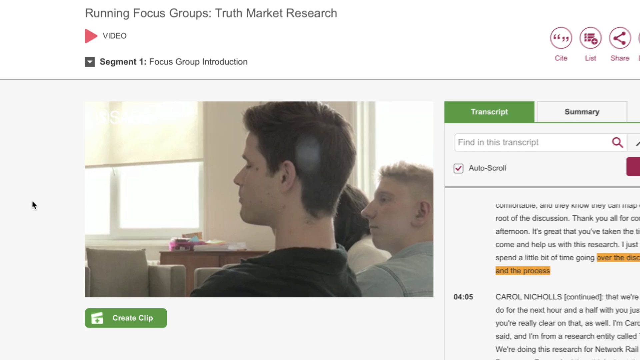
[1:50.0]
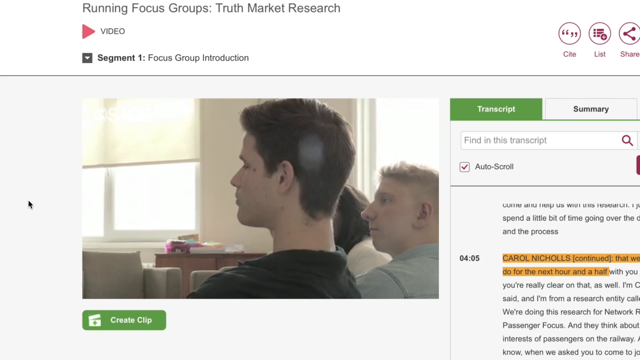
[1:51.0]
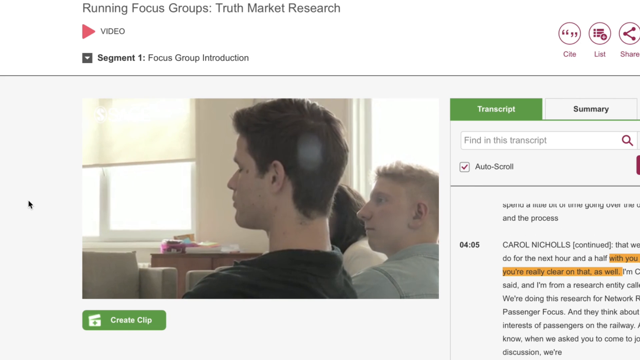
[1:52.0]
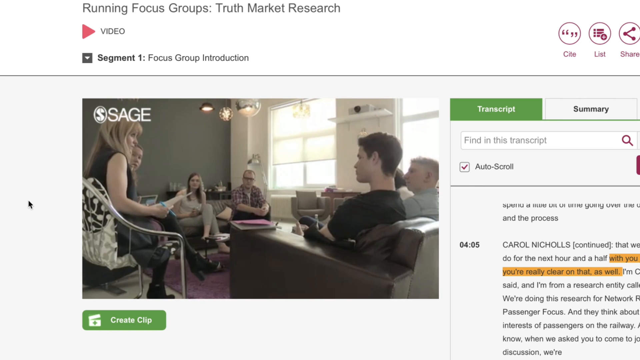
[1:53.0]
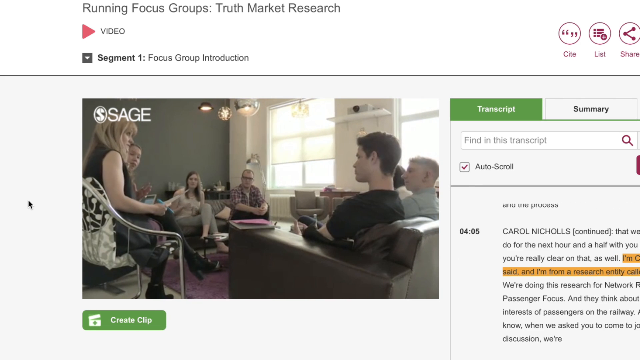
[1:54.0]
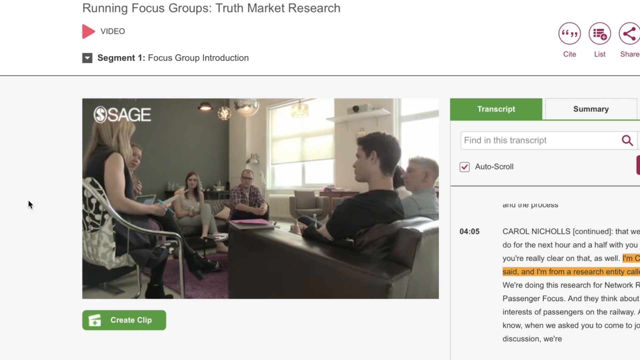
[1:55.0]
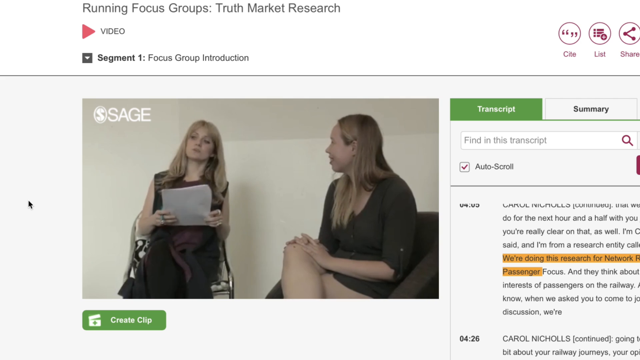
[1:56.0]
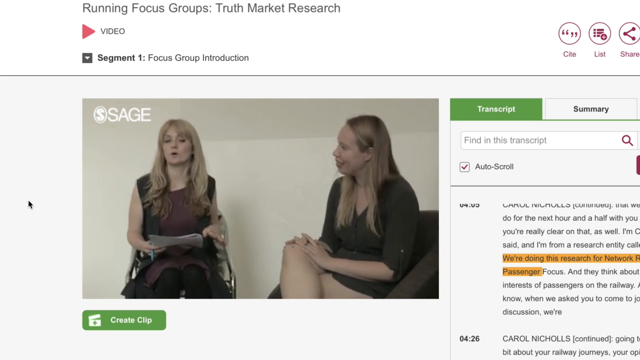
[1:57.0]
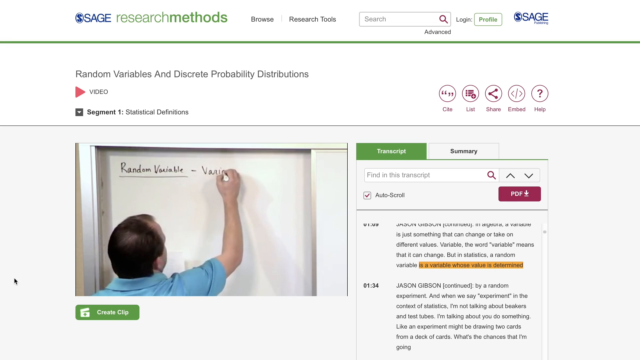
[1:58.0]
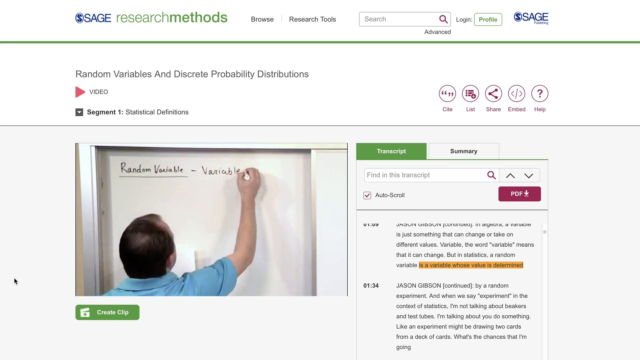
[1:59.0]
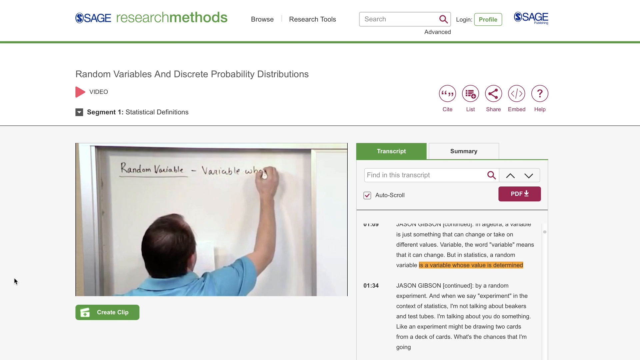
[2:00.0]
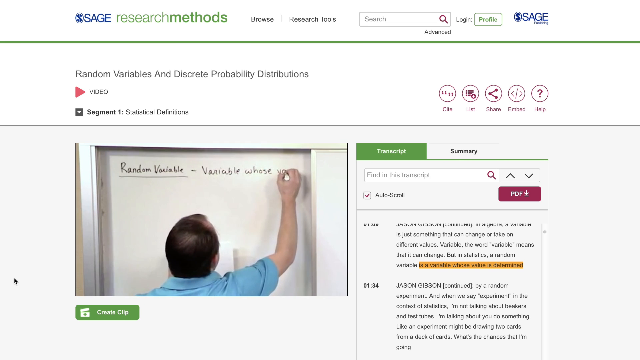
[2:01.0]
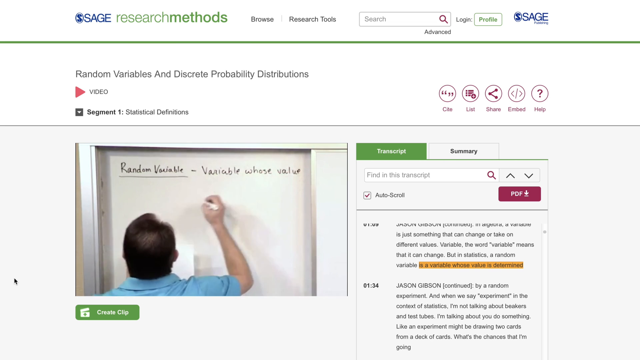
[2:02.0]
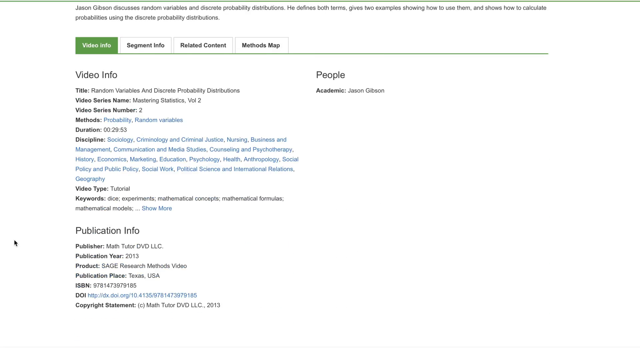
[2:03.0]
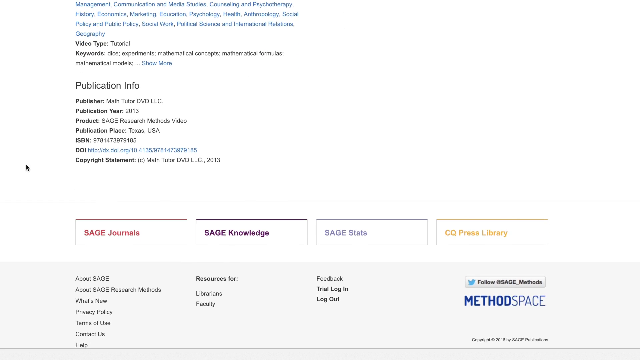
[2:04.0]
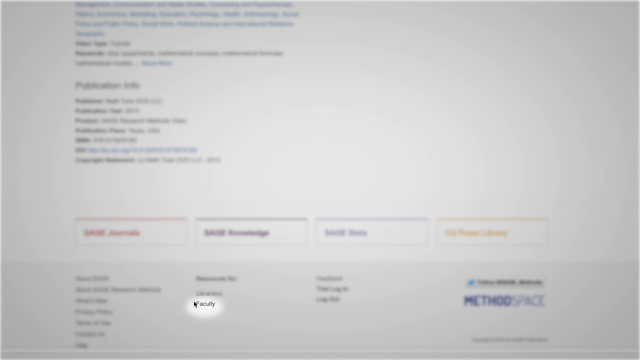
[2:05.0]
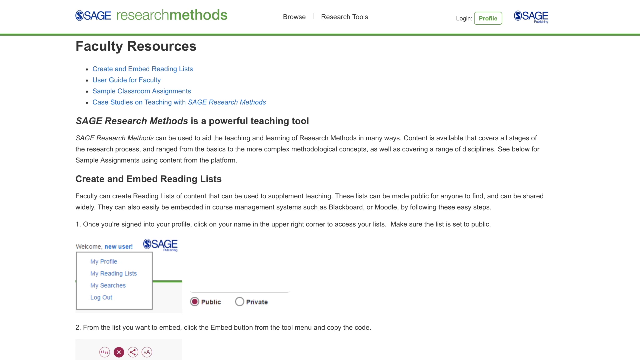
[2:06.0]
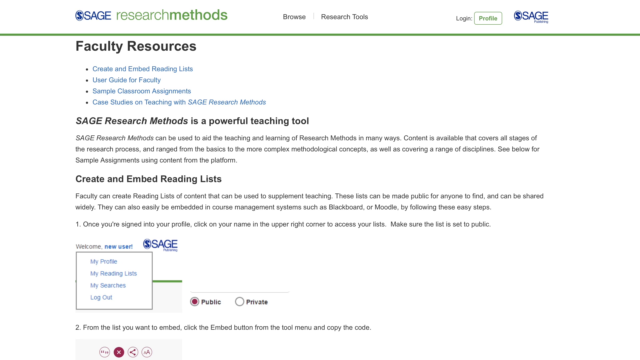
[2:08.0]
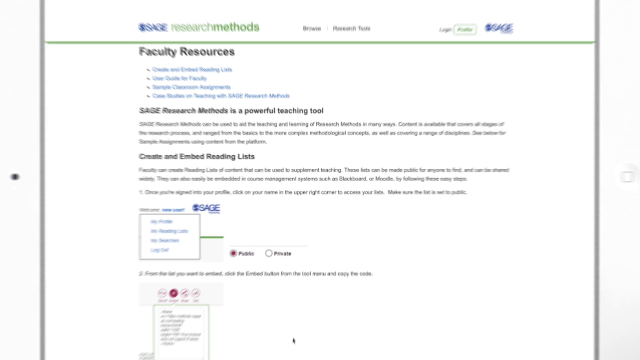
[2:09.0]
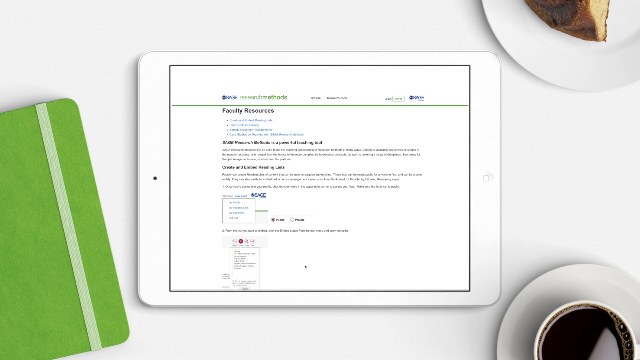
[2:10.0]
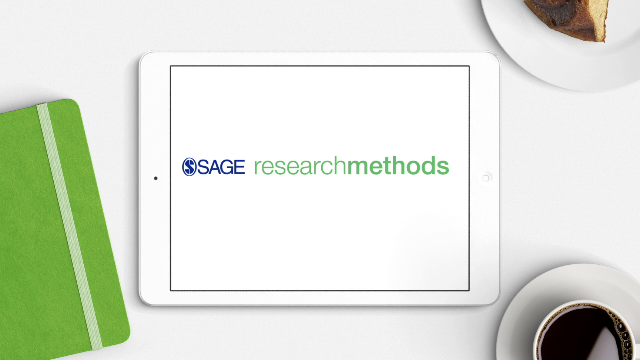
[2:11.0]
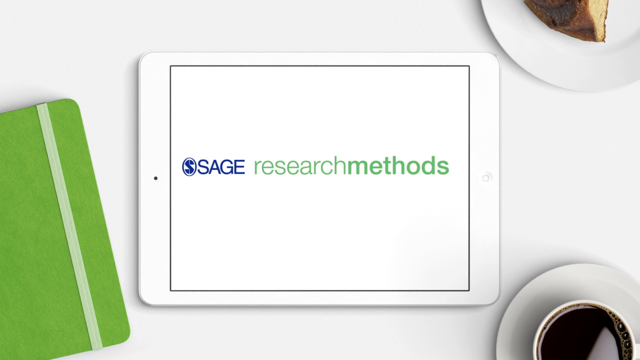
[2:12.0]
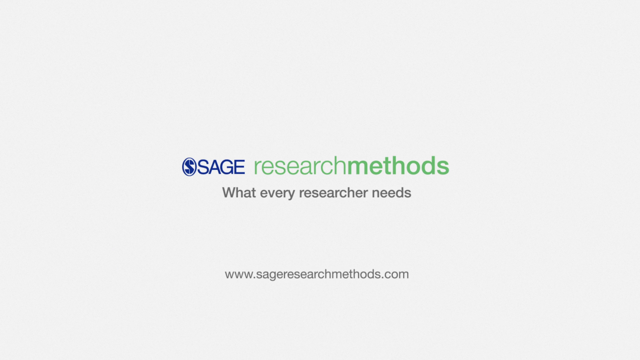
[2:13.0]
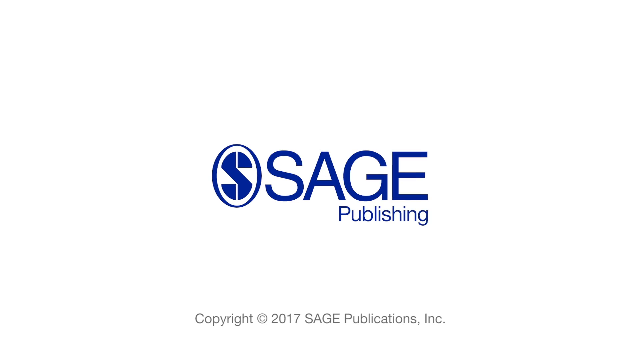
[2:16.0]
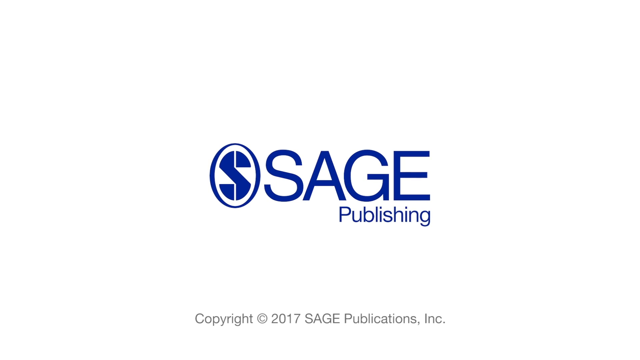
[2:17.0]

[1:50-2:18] The website offers videos, including ones of kids in a classroom, which can be paused and played.